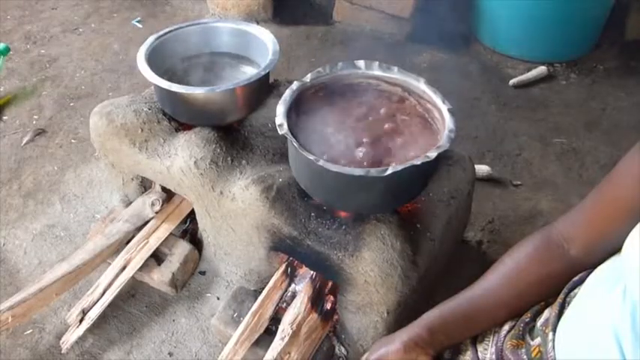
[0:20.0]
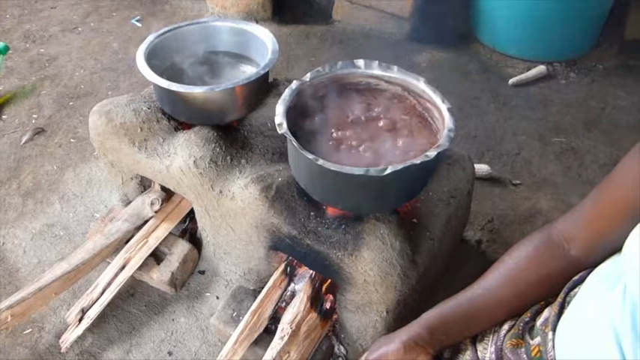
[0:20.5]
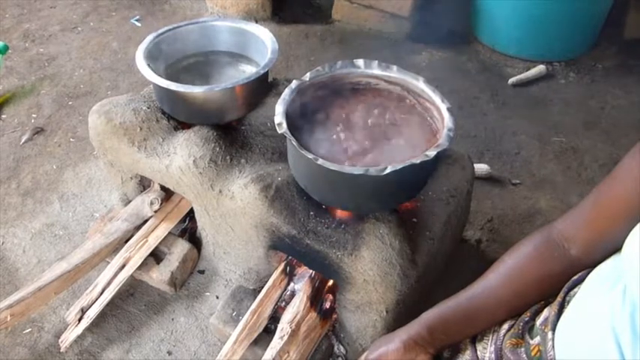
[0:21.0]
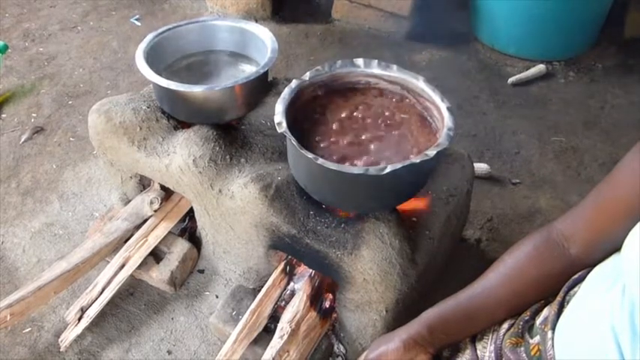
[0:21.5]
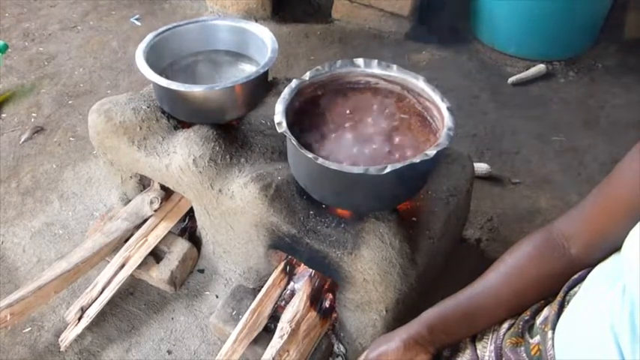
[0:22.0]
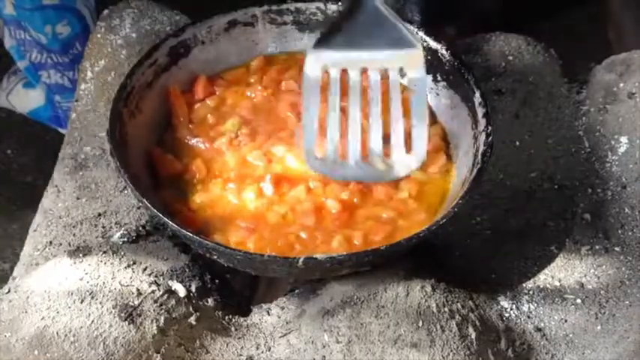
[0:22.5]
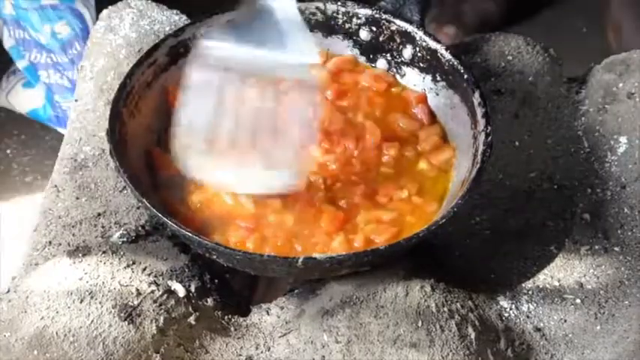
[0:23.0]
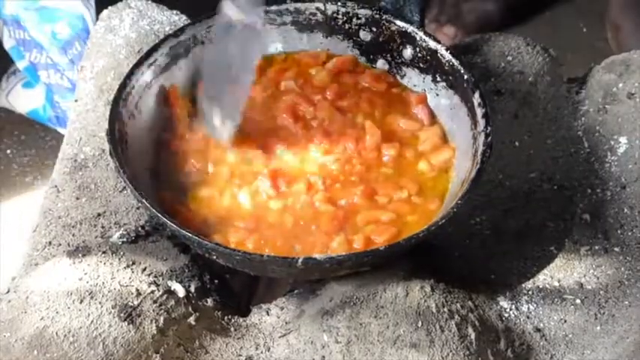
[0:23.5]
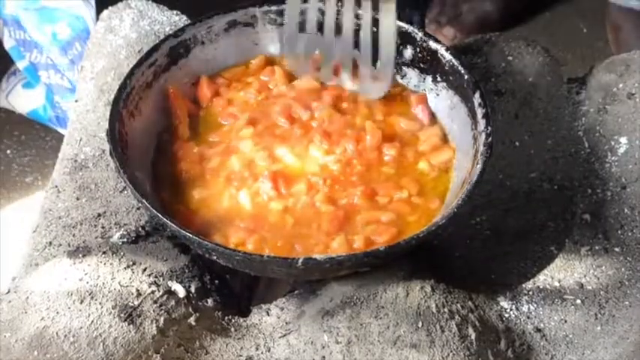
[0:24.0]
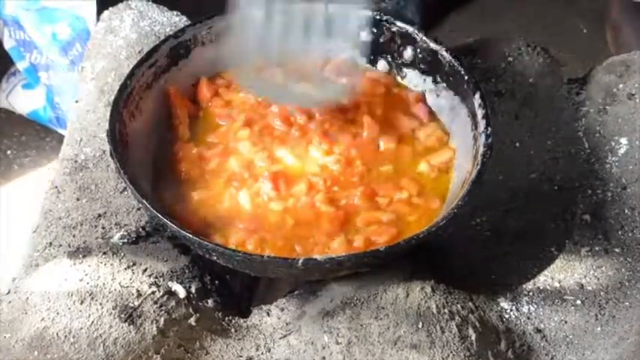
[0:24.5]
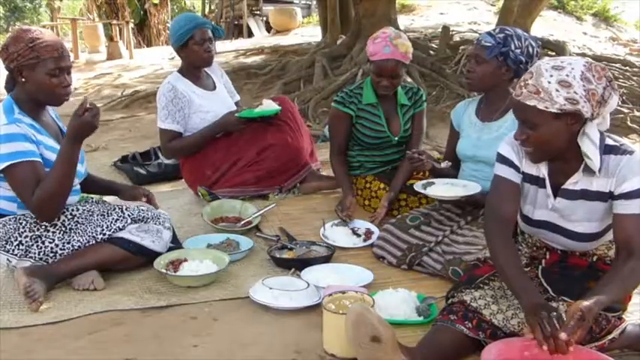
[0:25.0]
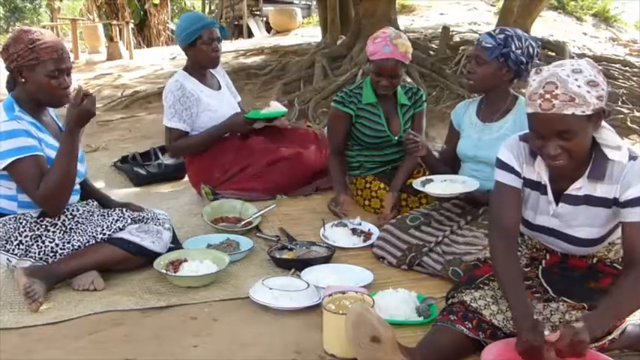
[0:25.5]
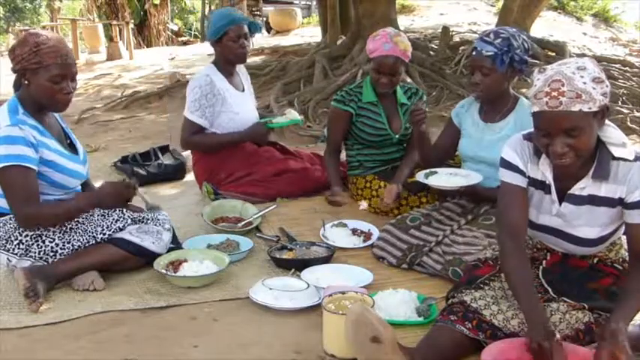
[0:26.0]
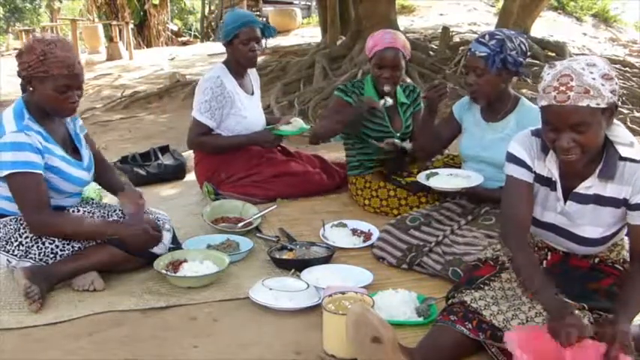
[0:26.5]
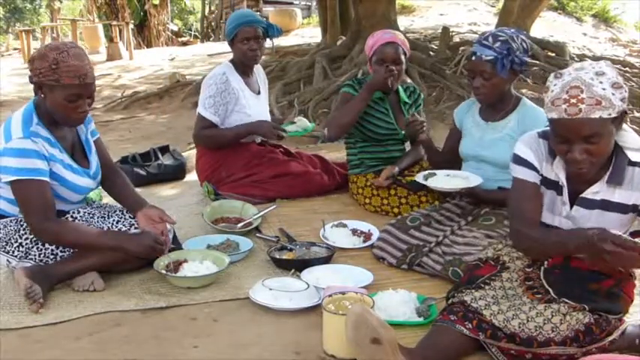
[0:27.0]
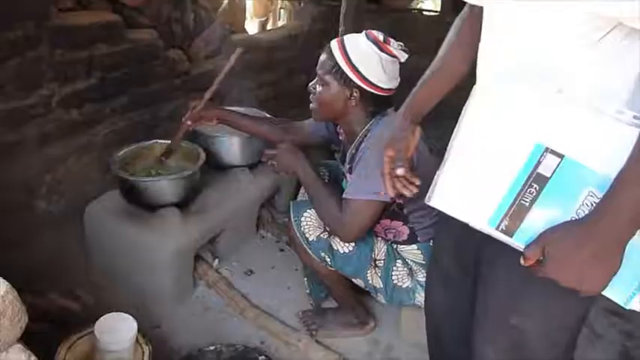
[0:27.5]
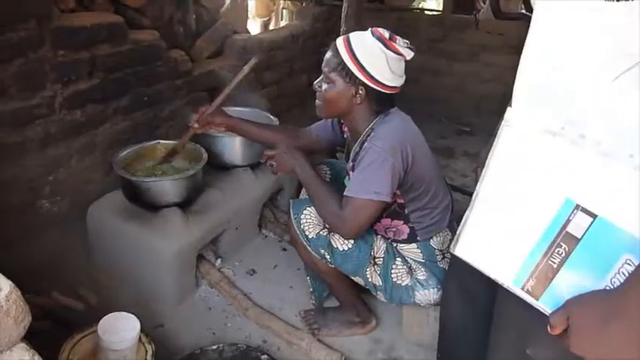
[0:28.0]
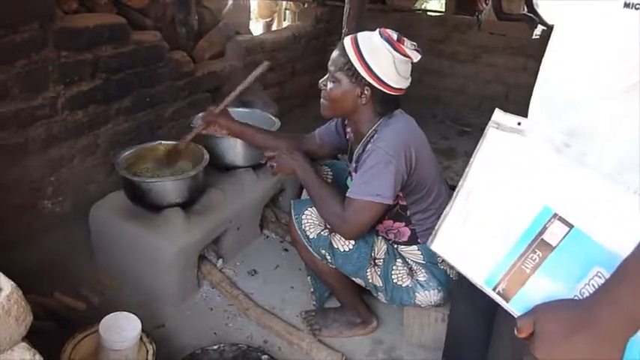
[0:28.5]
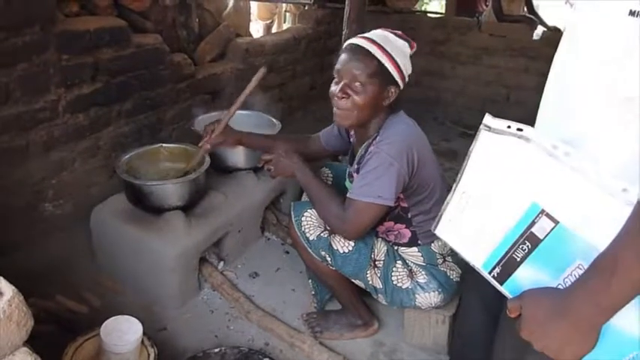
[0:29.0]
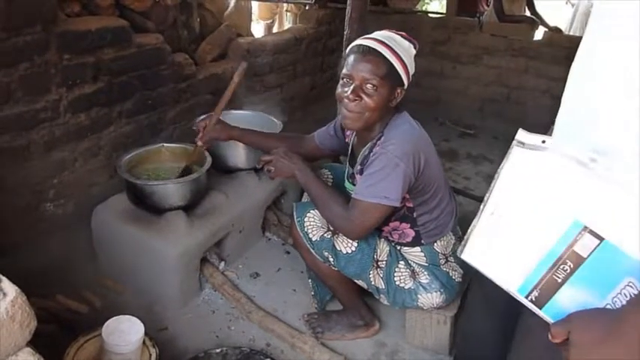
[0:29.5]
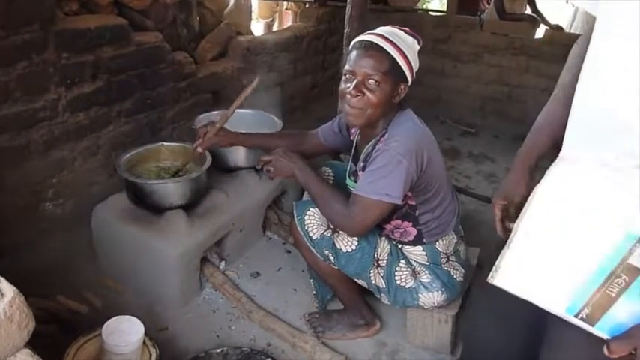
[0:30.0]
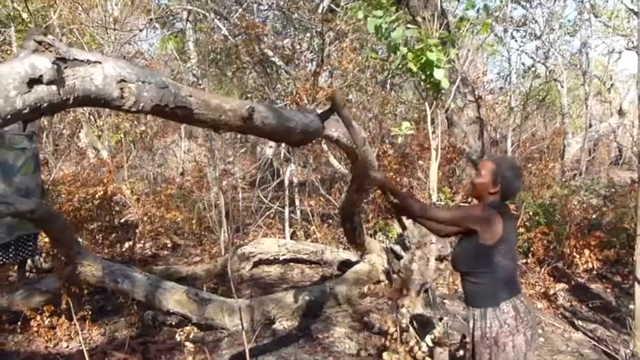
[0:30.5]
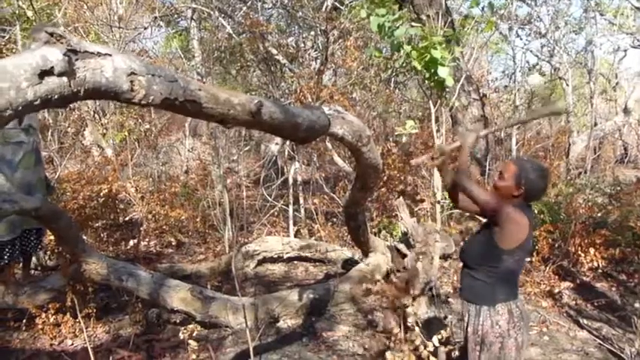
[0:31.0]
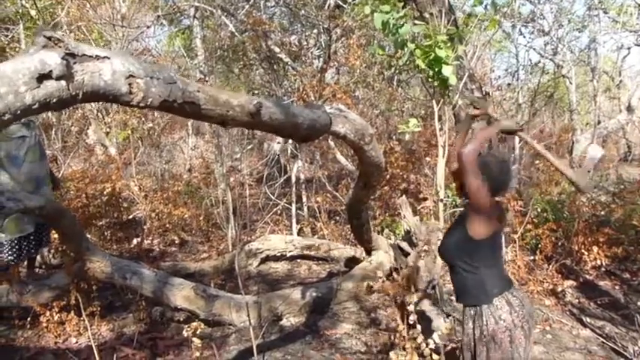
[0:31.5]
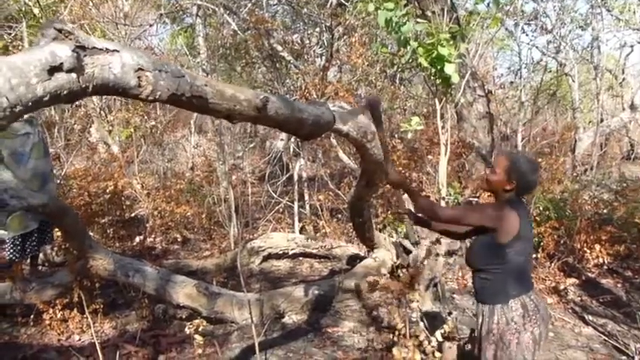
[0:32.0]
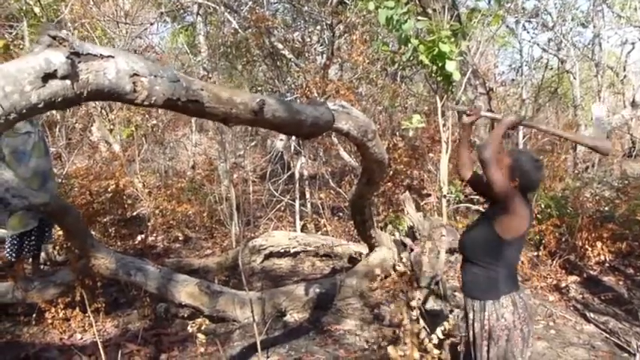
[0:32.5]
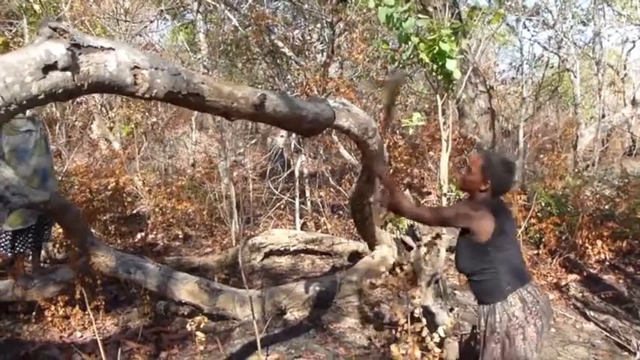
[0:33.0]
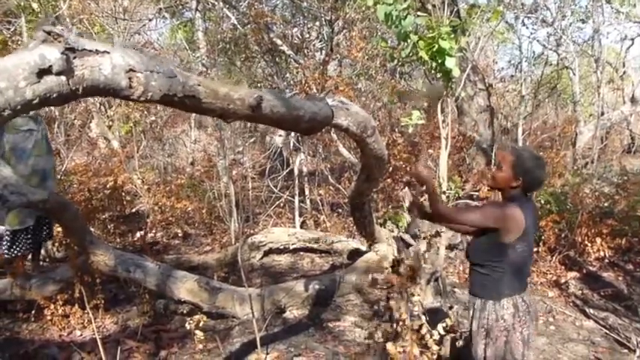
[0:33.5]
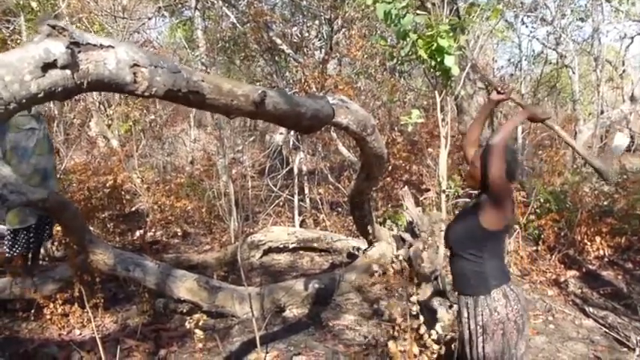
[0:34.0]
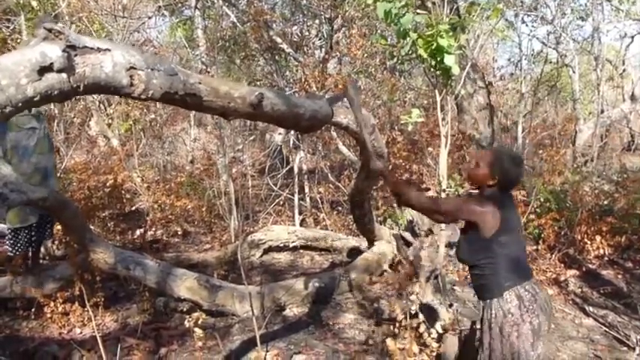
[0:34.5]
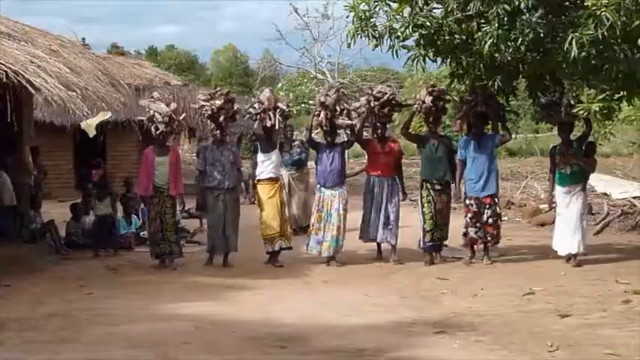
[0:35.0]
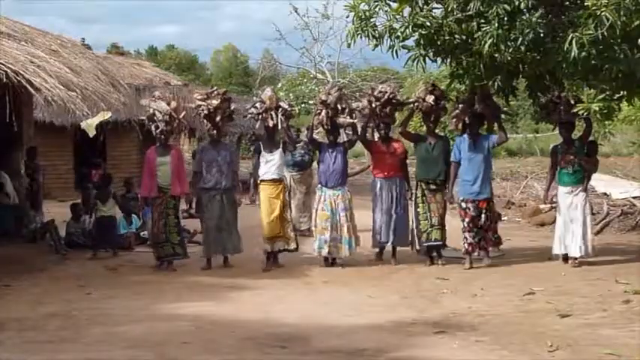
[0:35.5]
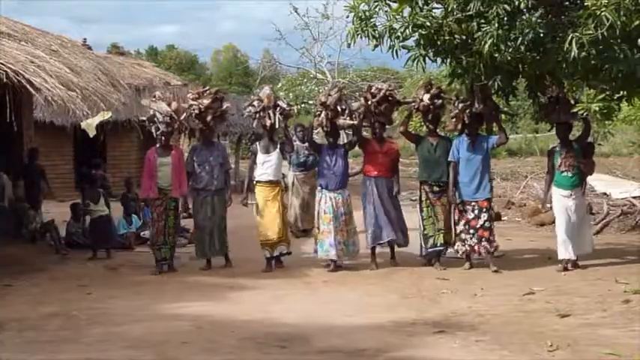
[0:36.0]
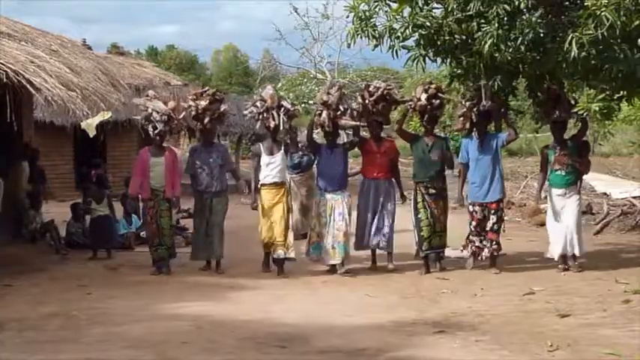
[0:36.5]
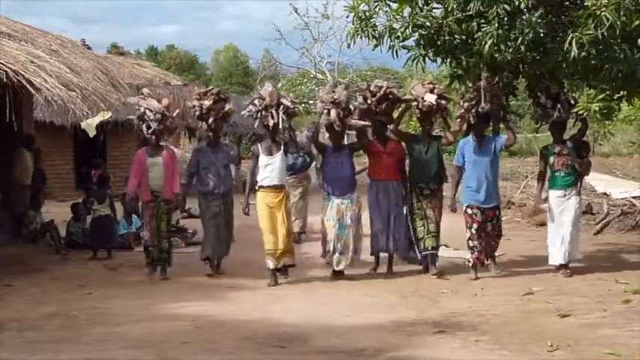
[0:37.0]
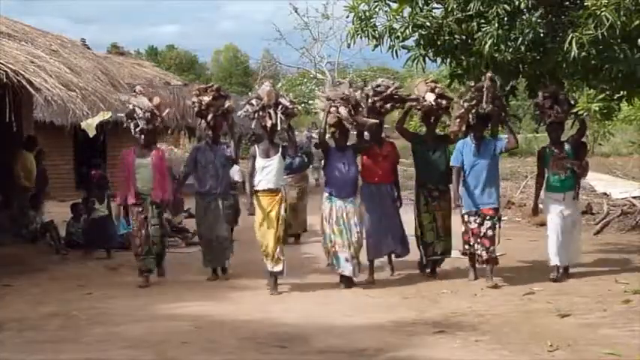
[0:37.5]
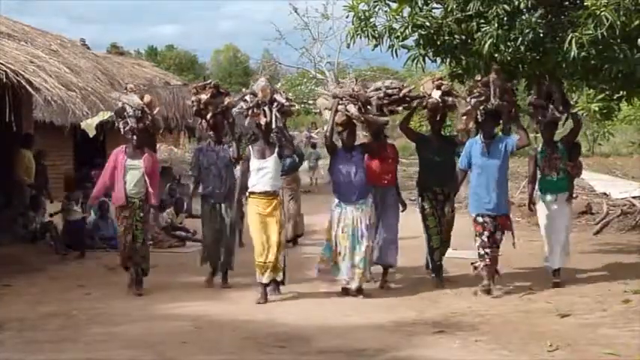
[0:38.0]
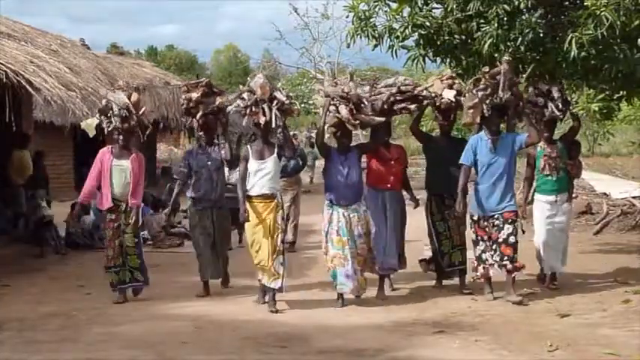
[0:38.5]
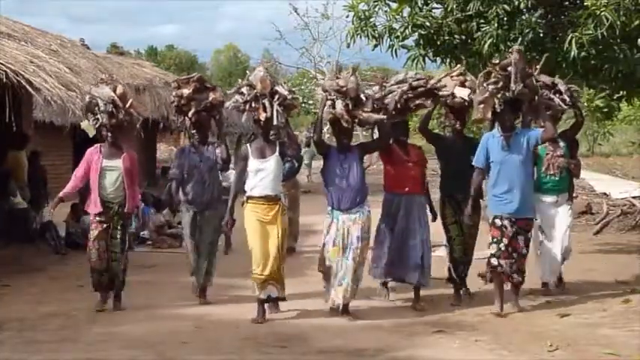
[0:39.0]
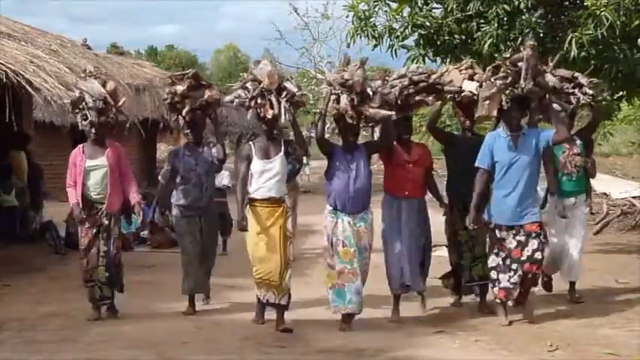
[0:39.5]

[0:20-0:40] Food is made over the ovens that some teens built: beans are prepared over these clay ovens, and then some kind of vegetables are cooked in a pan. Women eat what was made on the oven, sitting in a circle and eating together, and they seem happy about the food. Another woman is shown cooking, and then another woman is kind of chopping down a tree, seeming very enthusiastic about it. A group of women carry wood on their heads, walking side by side toward the camera. The women seem to be part of a community where all the work is done by them: some cook, some chop wood, and some carry the wood.